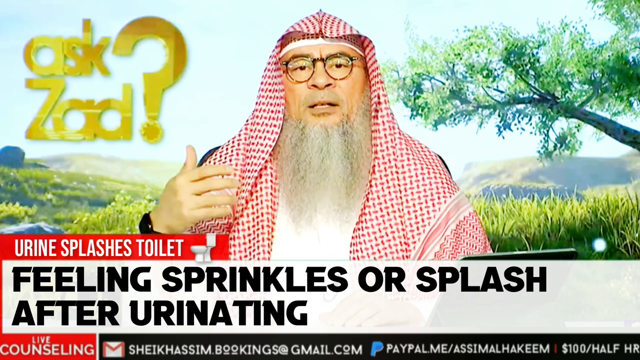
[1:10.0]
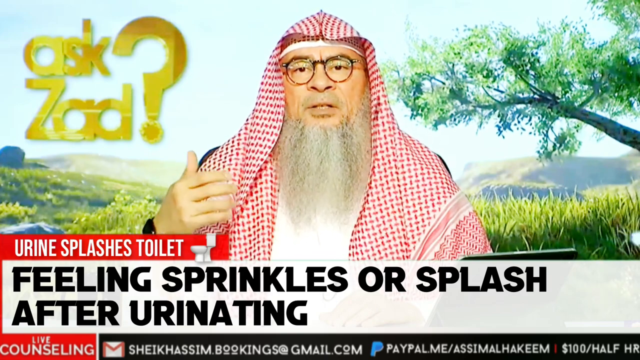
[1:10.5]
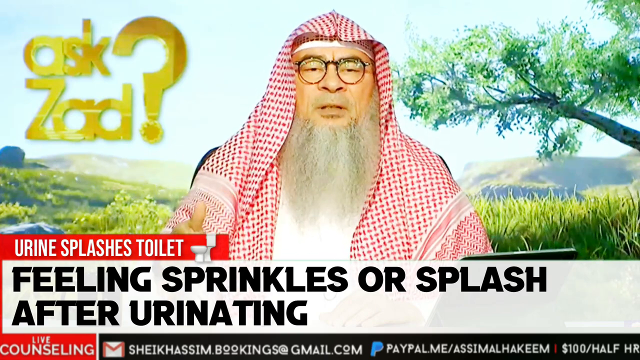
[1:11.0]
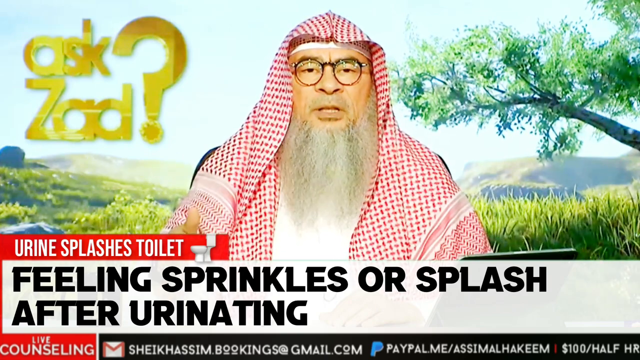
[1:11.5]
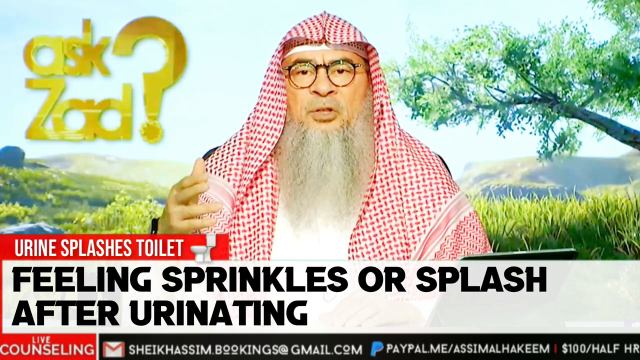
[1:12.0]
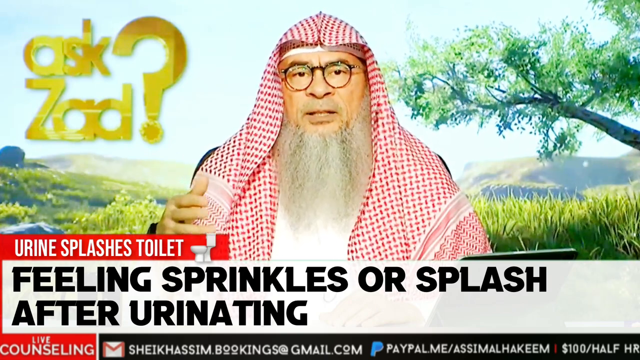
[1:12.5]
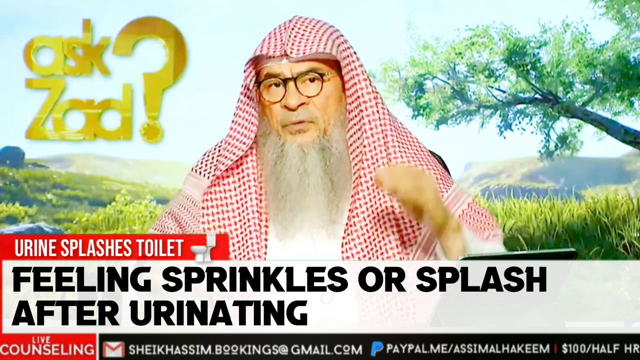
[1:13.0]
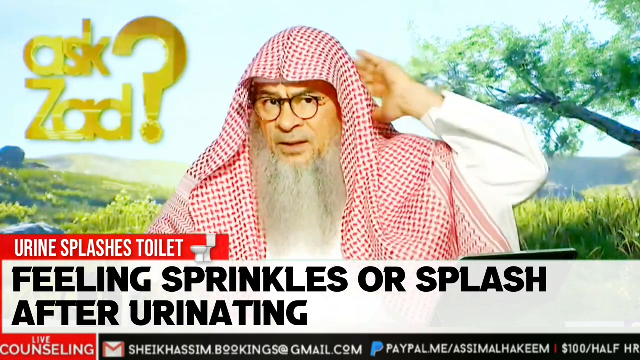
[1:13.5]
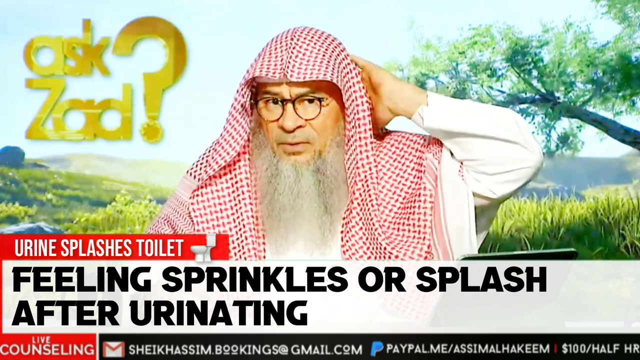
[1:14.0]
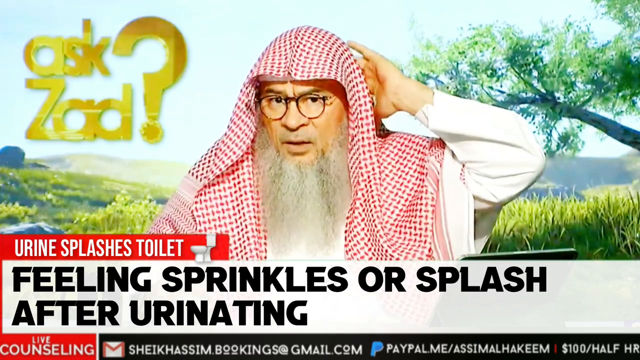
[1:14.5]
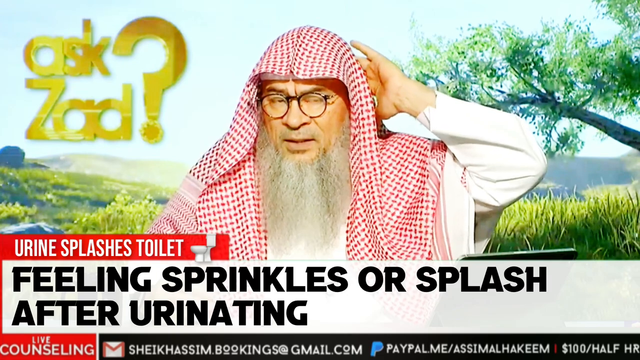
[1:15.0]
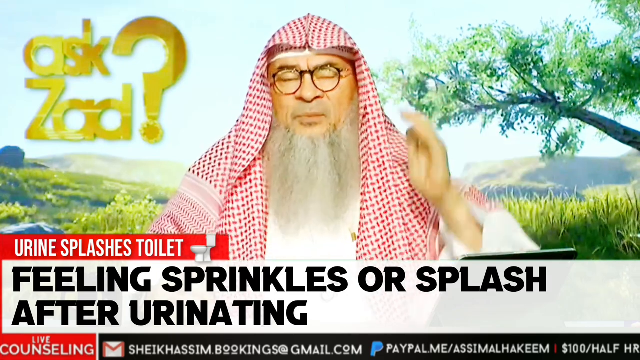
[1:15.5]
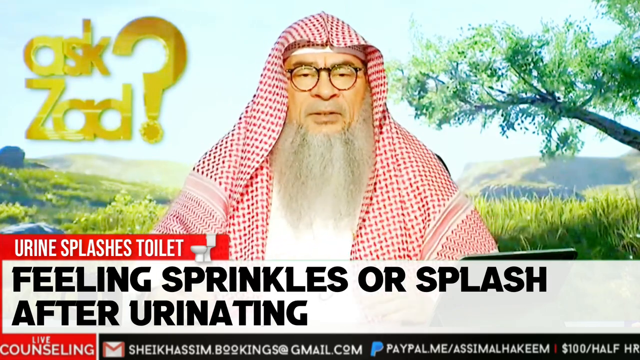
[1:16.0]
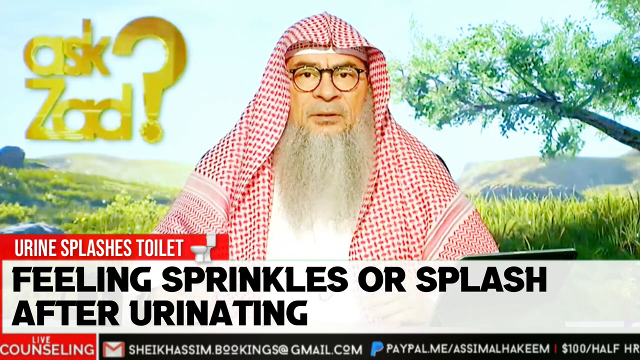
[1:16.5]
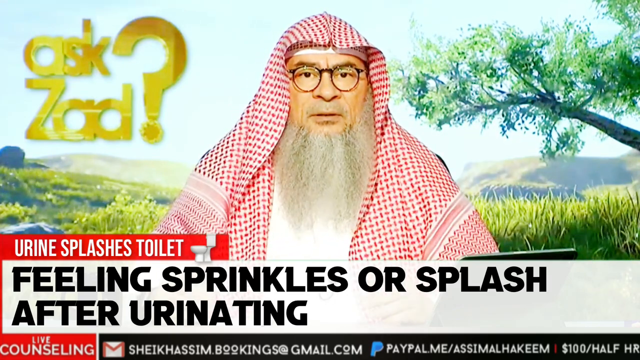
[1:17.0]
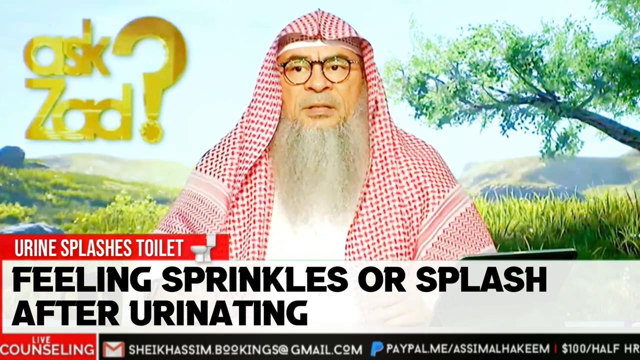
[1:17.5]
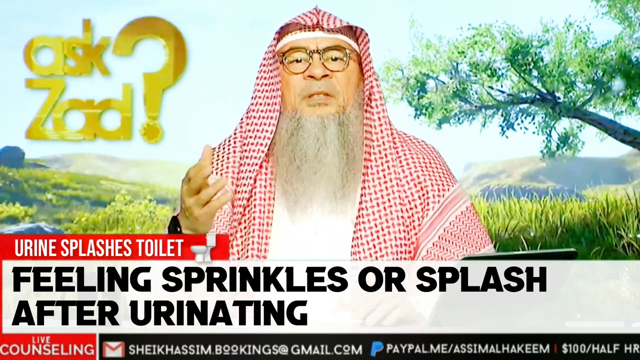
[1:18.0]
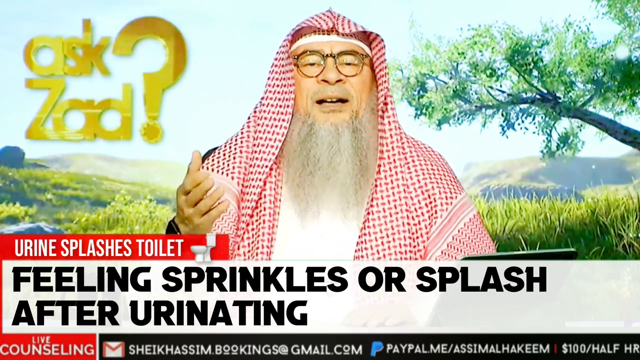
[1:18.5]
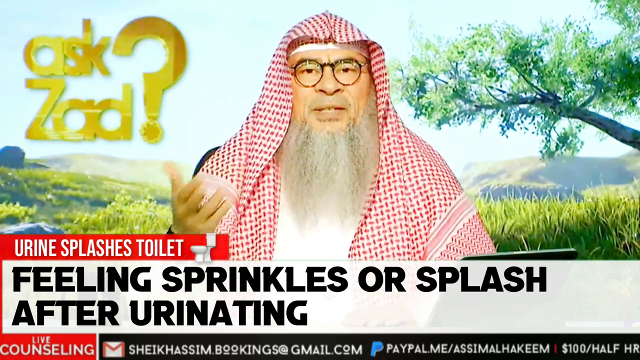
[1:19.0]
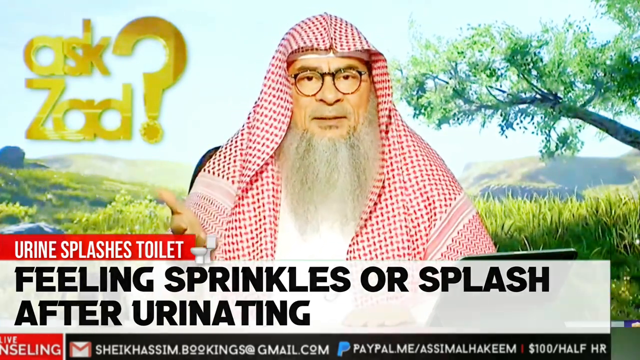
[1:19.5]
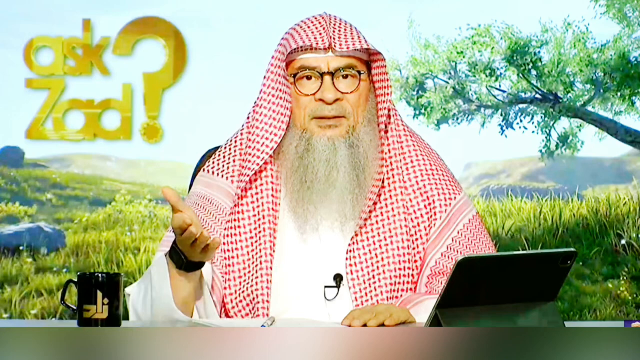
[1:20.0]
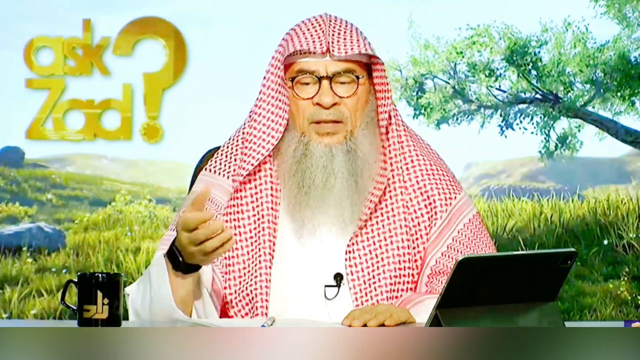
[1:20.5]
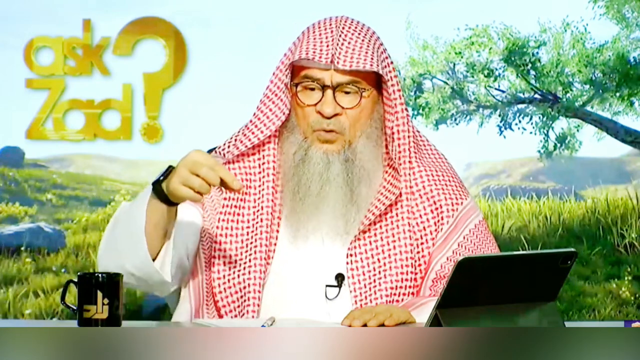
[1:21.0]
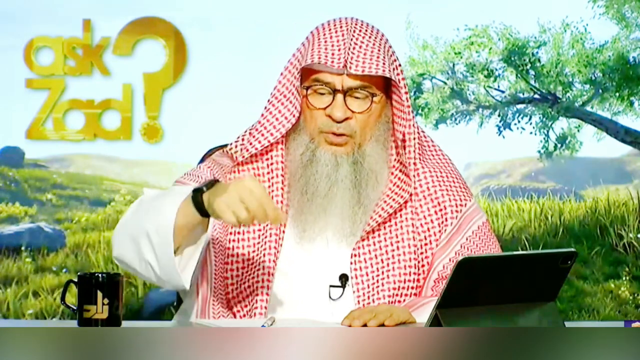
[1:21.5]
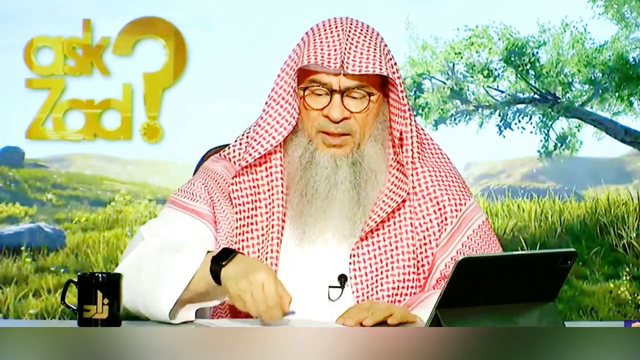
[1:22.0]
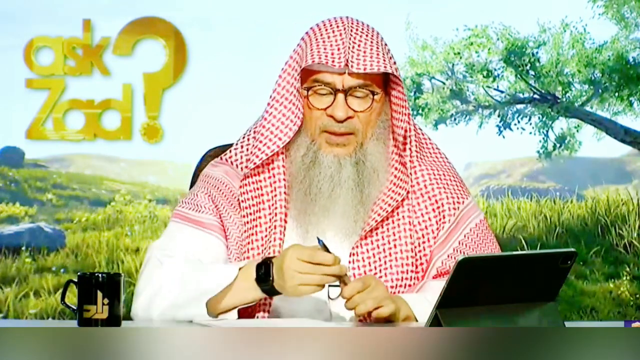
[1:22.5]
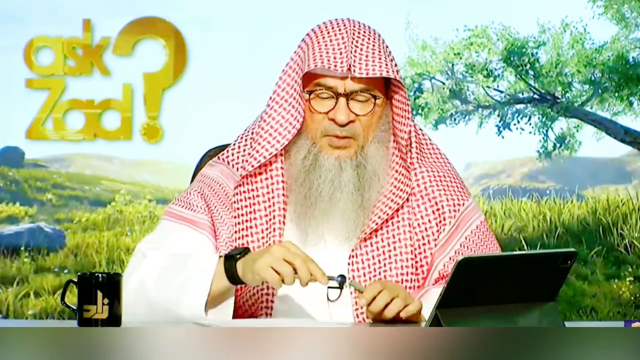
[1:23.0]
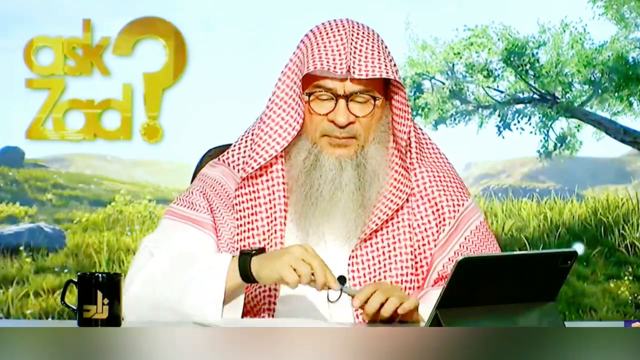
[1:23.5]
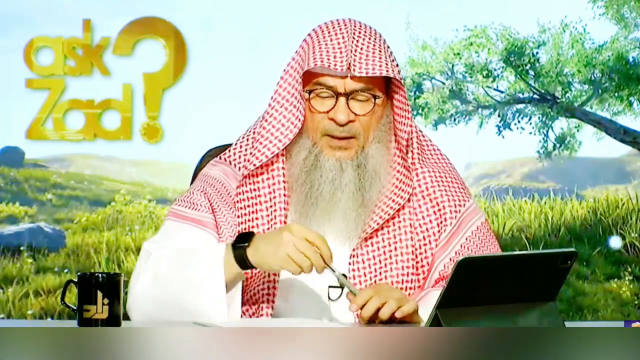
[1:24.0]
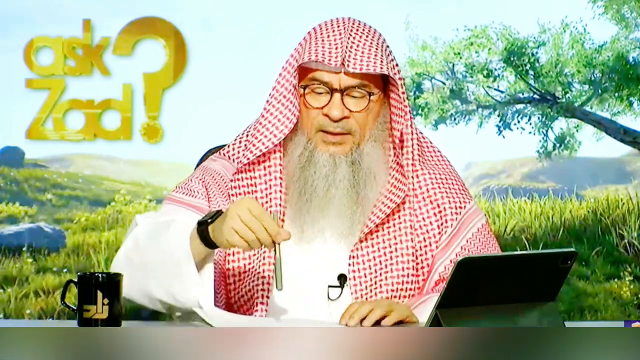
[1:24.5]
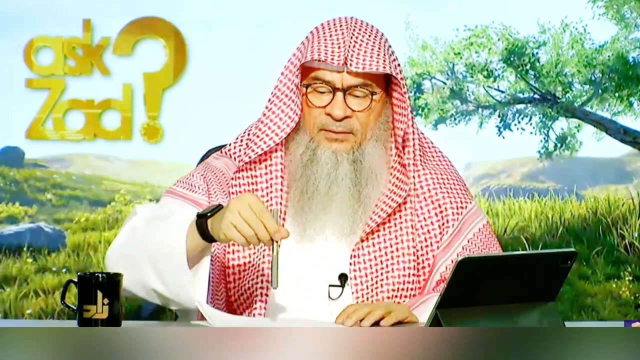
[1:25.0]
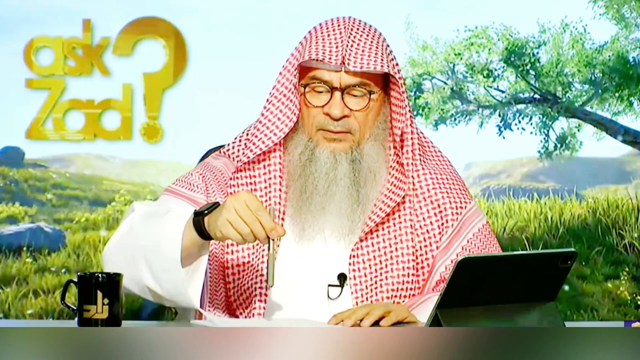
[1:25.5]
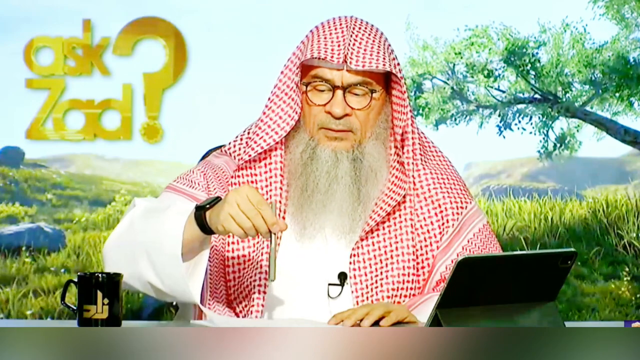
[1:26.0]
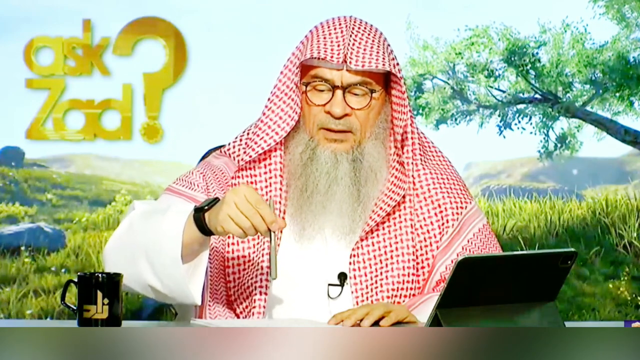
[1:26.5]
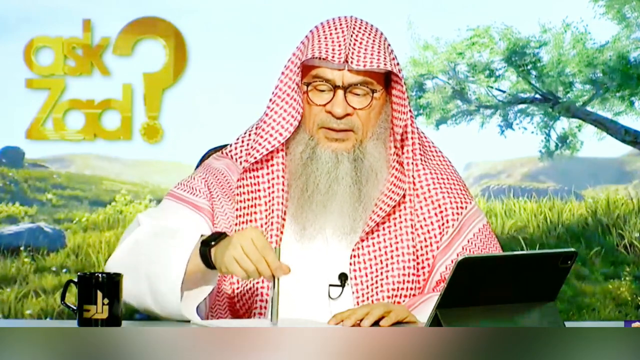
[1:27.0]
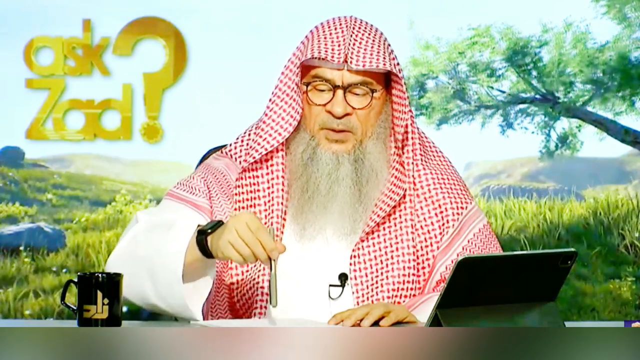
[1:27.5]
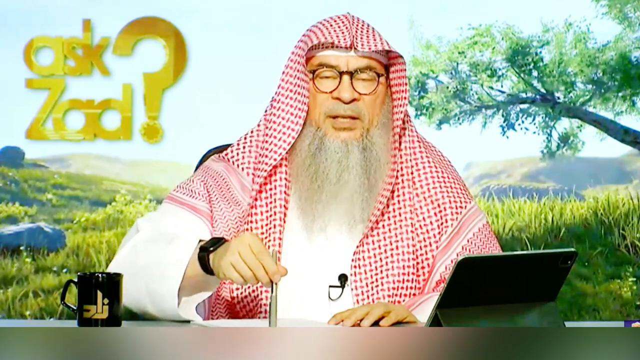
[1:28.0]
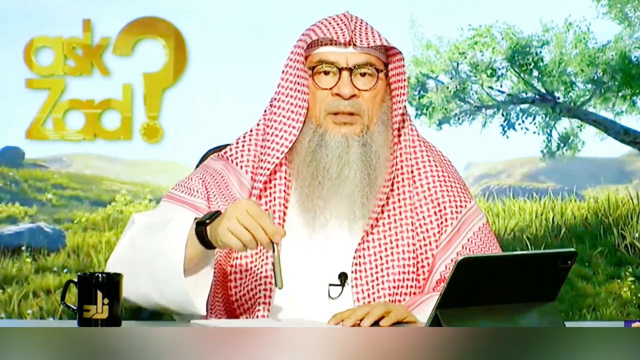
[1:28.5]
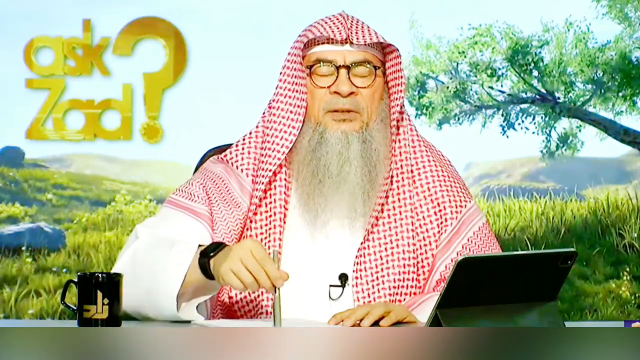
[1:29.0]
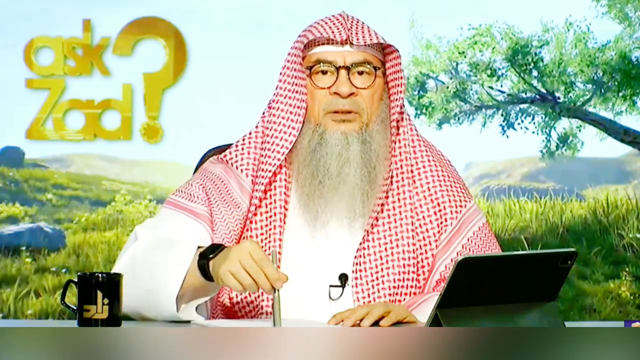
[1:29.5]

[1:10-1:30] The Sheik makes a motion with his left hand as though scratching the back of his head, then keeps talking with his right hand. The bottom caption goes away. A lapel mic is visible, sort of in the middle of his chest. His left hand is palm down on the desk while his right hand gestures, and his sleeve has a wide cuff. He holds something in his hand, possibly a pen or a marker, right side up, tapping the desk with it to make a point rather than drawing. It is a gray pen, and he puts the cap back on it. He drops it as though using it to mimic some type of motion. A piece of paper is laying on the desk in front of him.